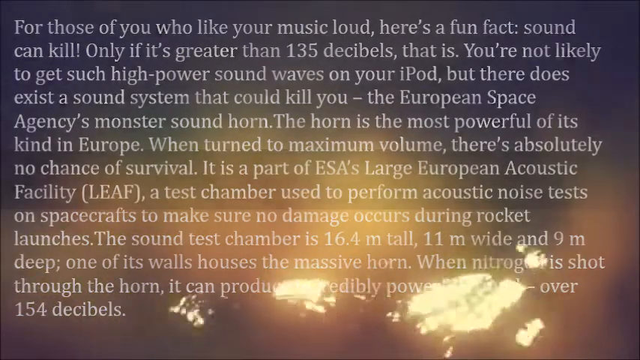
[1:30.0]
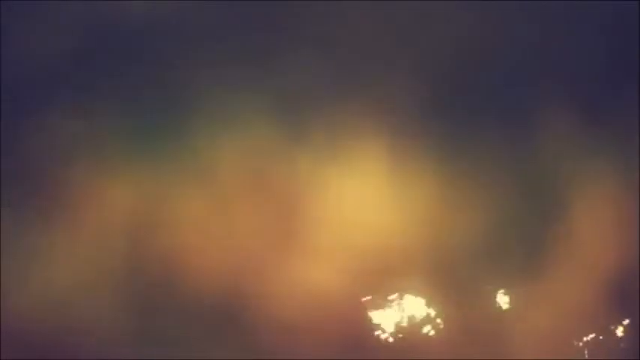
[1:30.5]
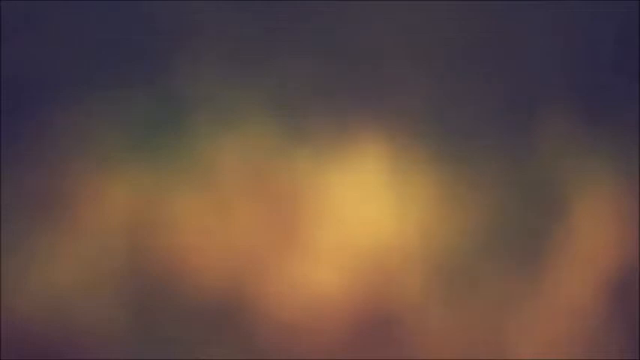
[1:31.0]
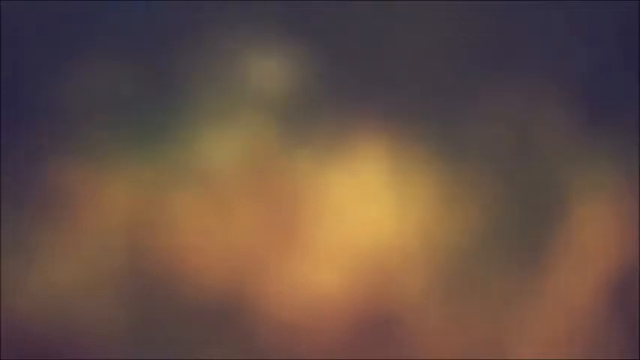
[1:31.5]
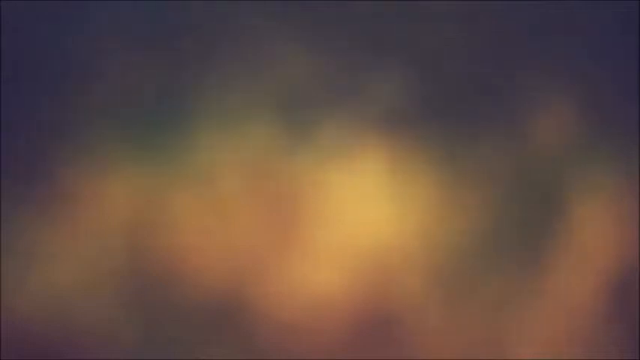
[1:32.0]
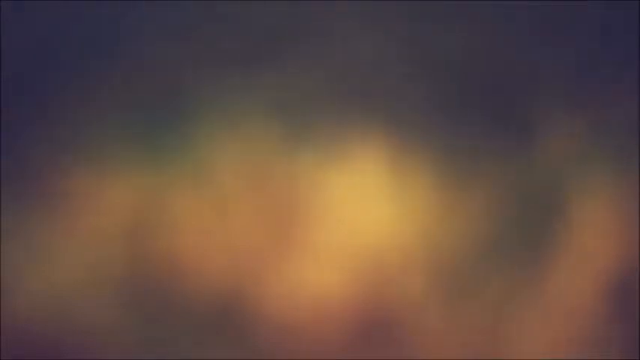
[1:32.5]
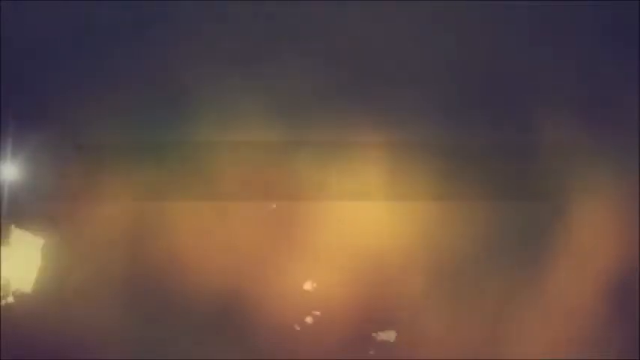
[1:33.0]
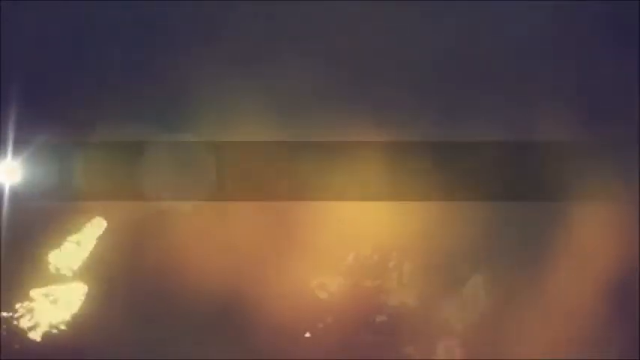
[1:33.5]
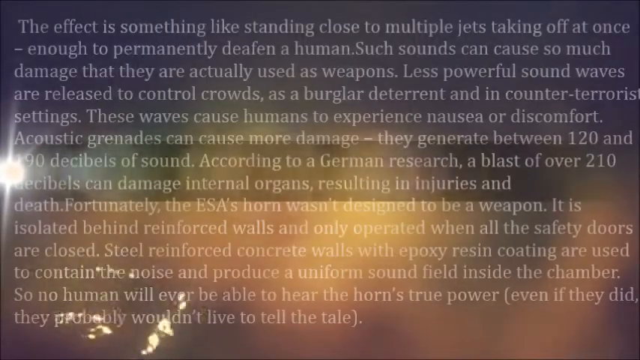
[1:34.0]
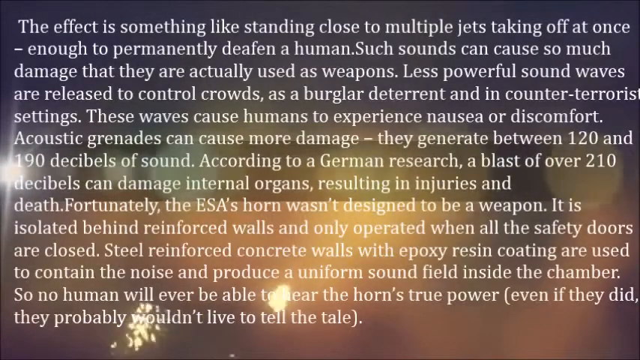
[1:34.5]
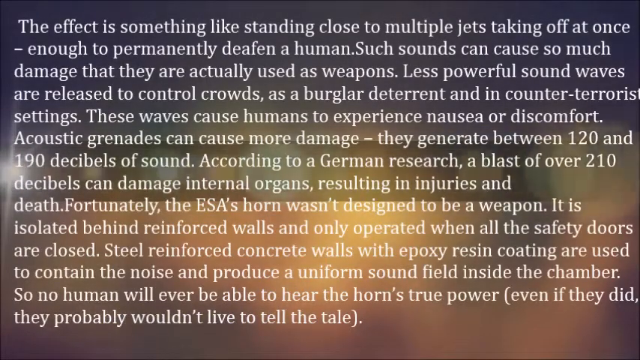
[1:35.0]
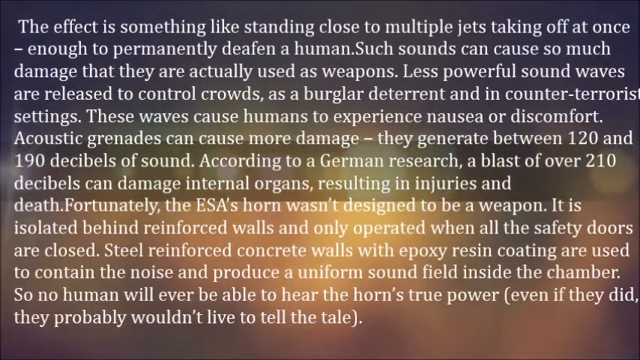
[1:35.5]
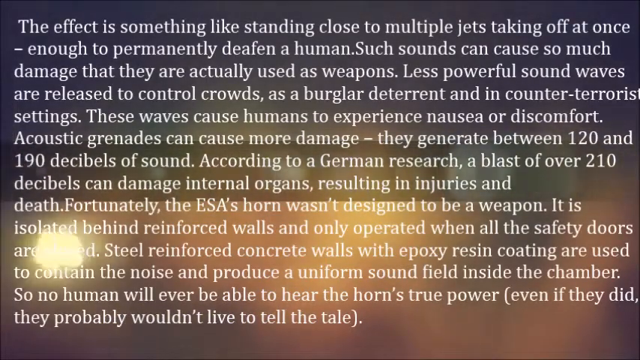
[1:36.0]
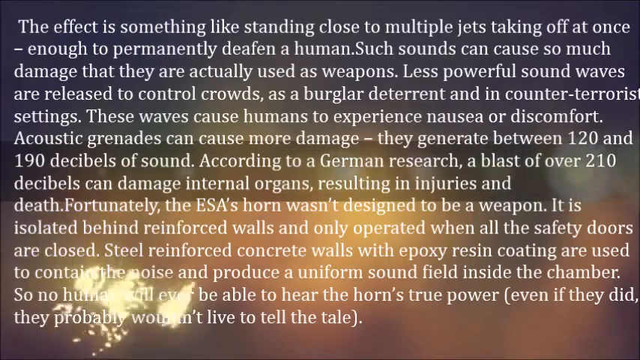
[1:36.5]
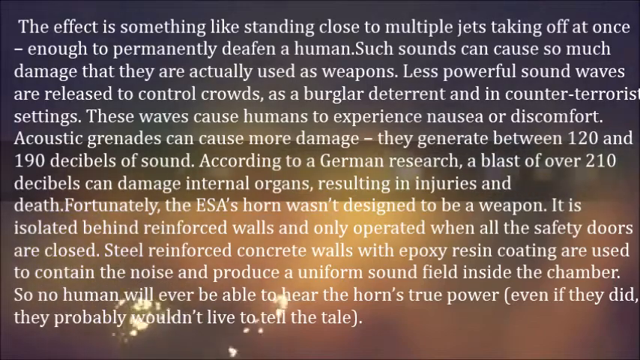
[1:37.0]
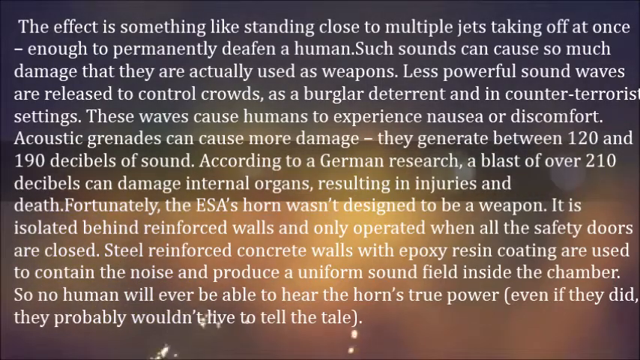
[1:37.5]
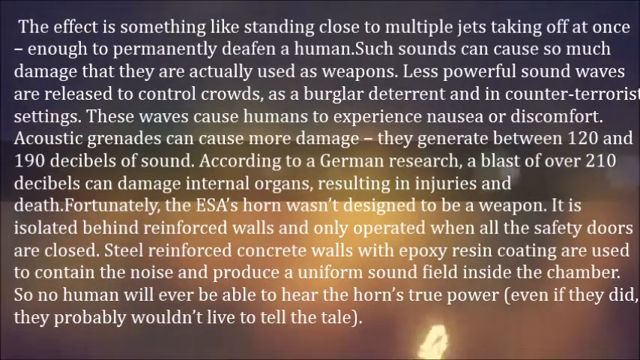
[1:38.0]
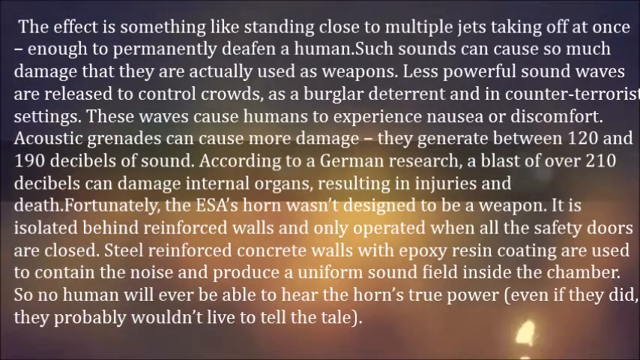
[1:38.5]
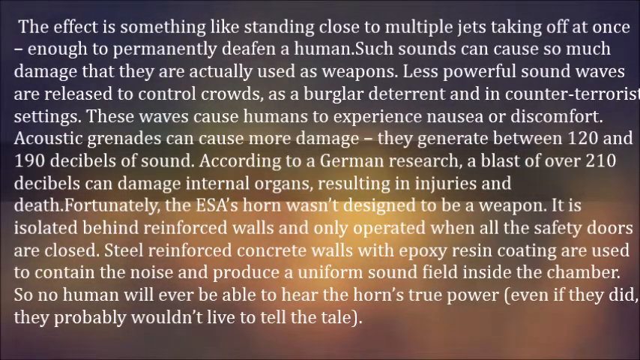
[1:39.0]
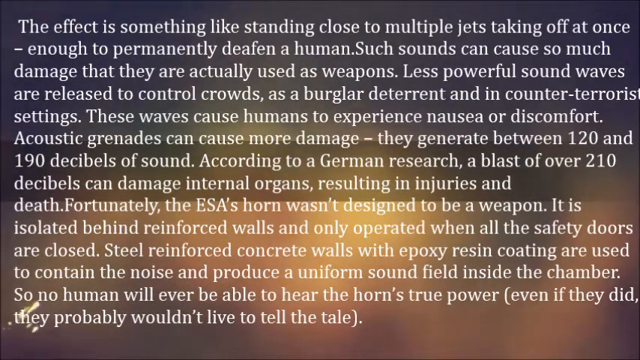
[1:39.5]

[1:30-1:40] The text continues: "The effect is something like standing close to multiple jets taking off at once. Enough to permanently deafen a human. Such sounds can cause so much damage that they are actually used as weapons." It goes on: "These waves cause humans to experience nausea or discomfort. Acoustic grenades can cause more damage. They generate between 120 and 190 decibels of sound." It states that a blast of over 210 decibels can damage internal organs, resulting in injuries and death, and that "Fortunately, the ESA's horn wasn't designed to be a weapon." It adds: "Steel-reinforced concrete walls with epoxy resin coating are used to contain the noise and produce a uniform sound field inside the chamber, so no human will ever be able to hear the horn's true power. Even if they did, they probably wouldn't live to tell the tale."